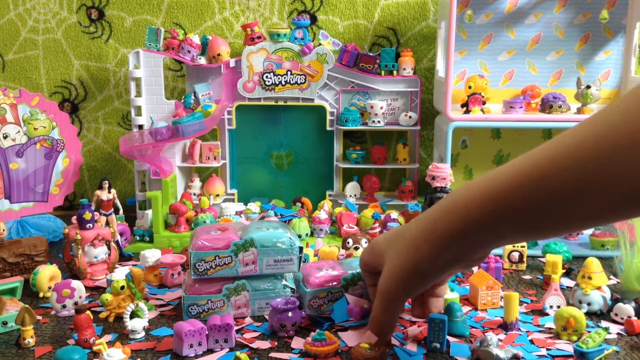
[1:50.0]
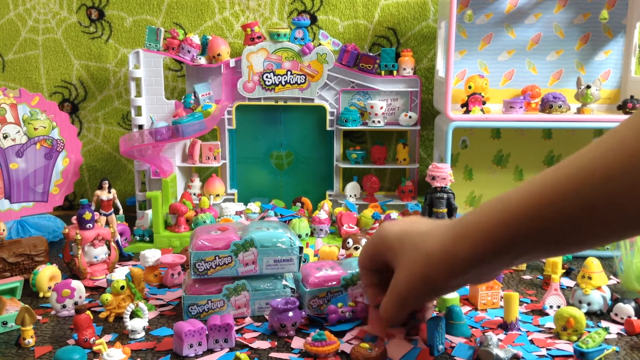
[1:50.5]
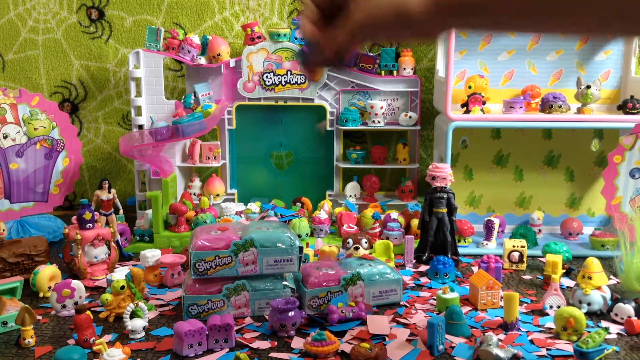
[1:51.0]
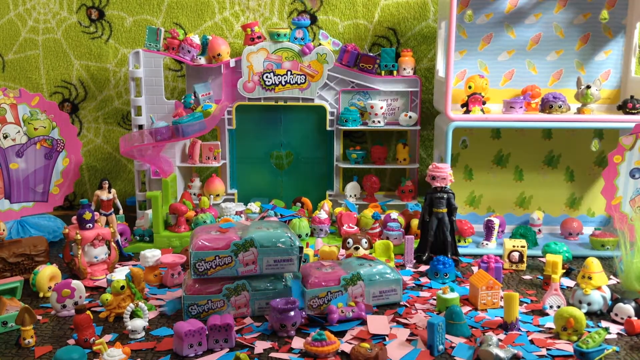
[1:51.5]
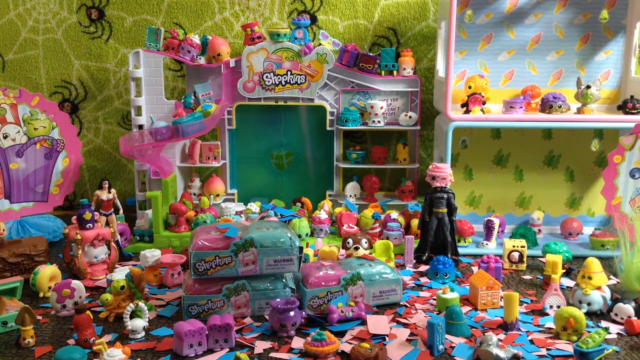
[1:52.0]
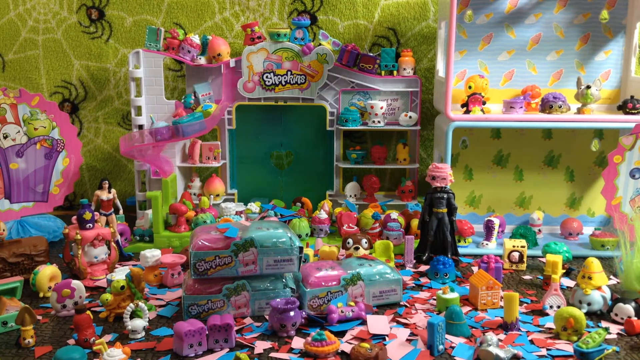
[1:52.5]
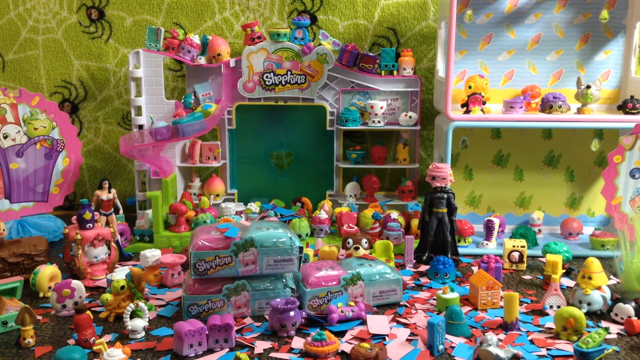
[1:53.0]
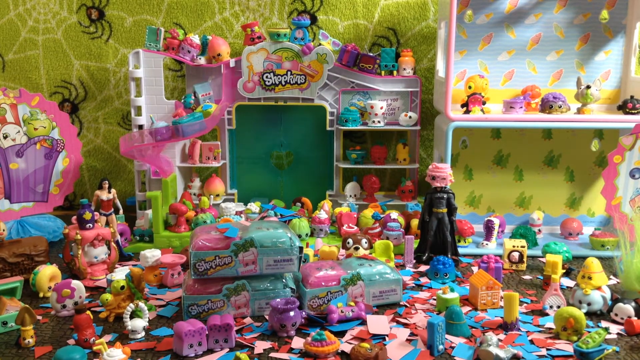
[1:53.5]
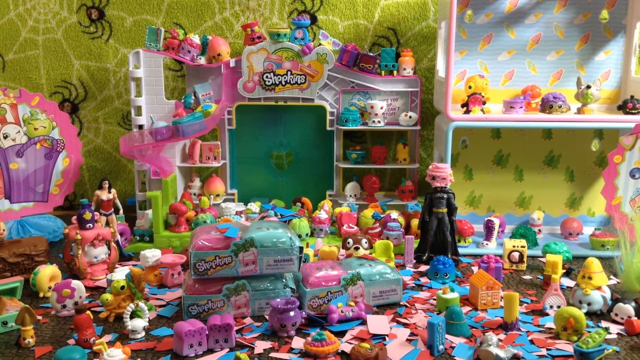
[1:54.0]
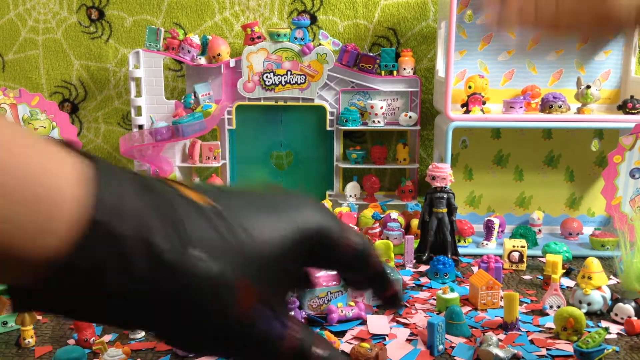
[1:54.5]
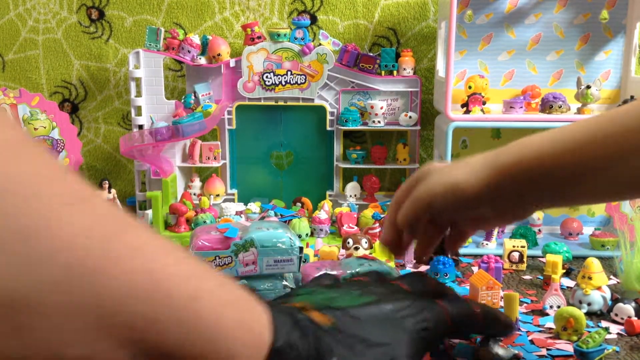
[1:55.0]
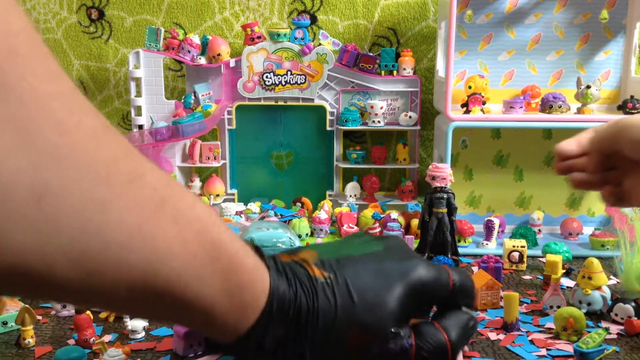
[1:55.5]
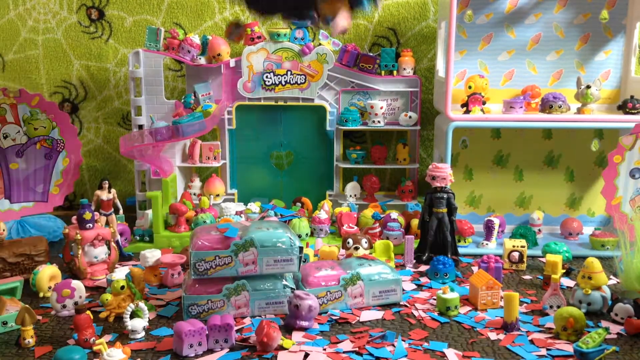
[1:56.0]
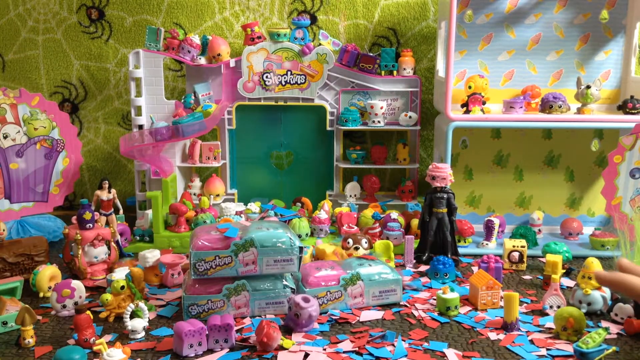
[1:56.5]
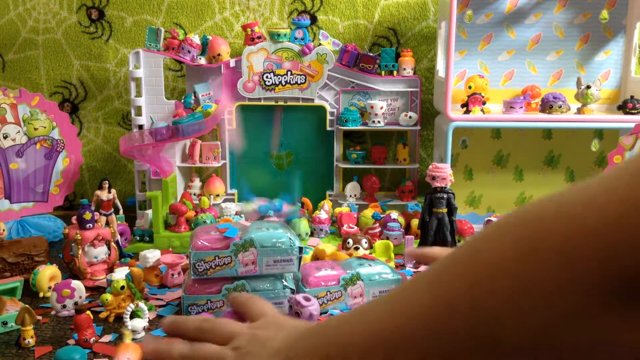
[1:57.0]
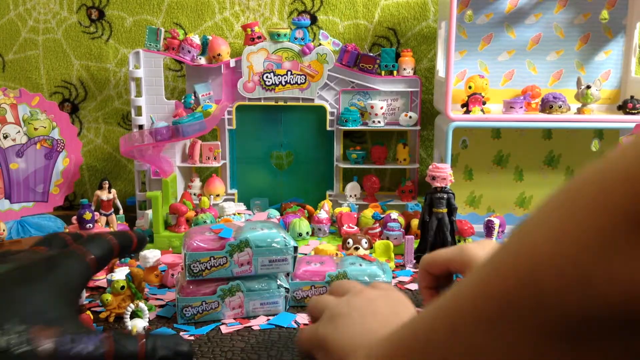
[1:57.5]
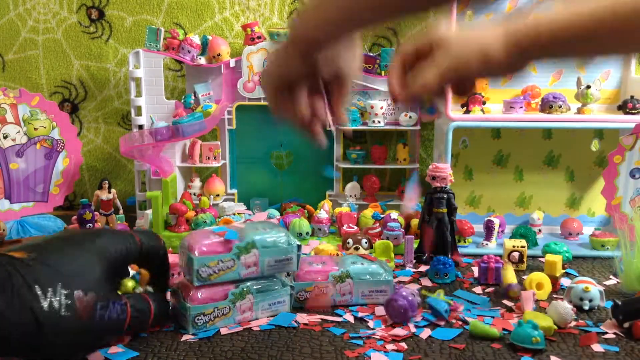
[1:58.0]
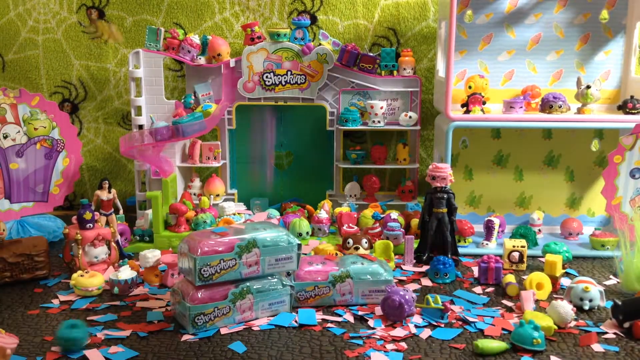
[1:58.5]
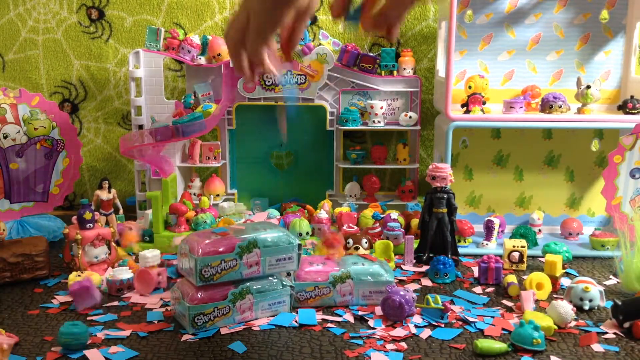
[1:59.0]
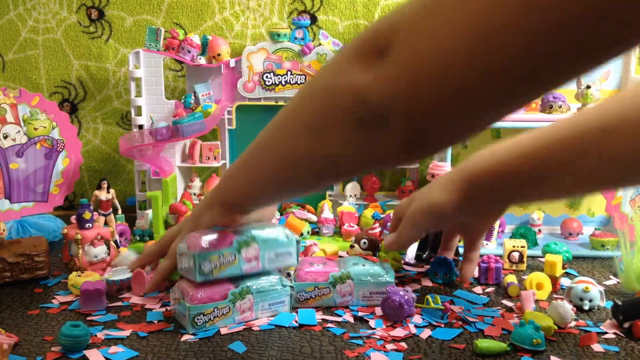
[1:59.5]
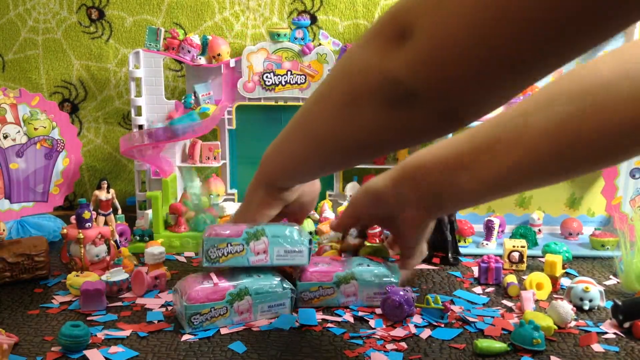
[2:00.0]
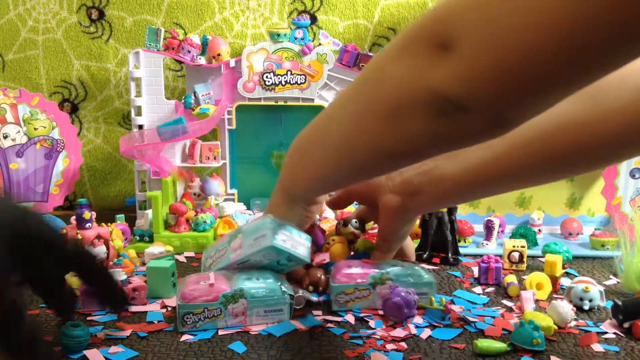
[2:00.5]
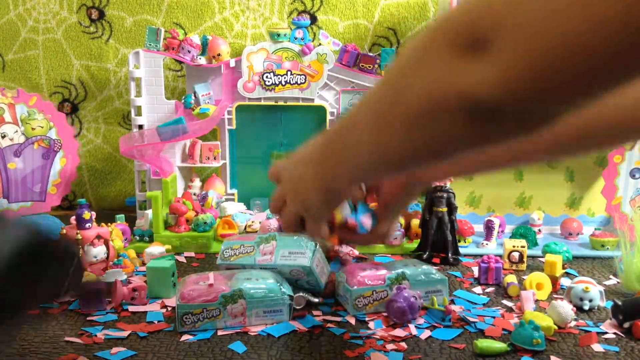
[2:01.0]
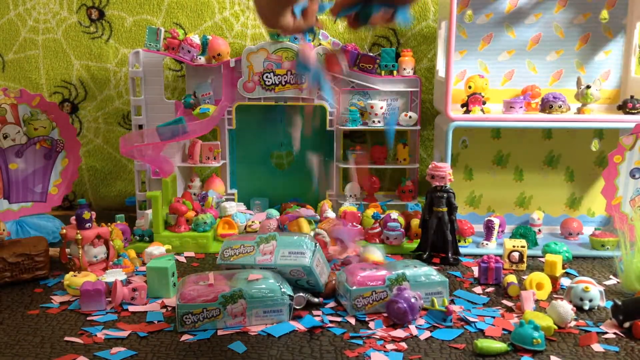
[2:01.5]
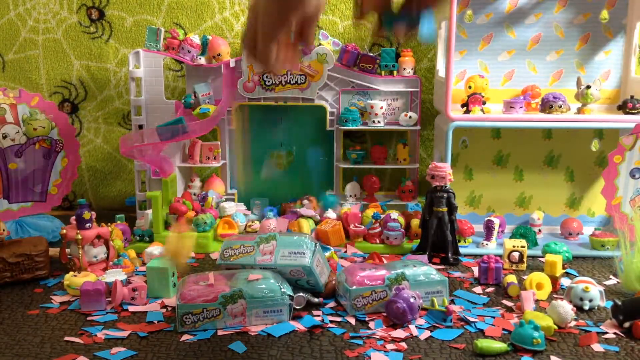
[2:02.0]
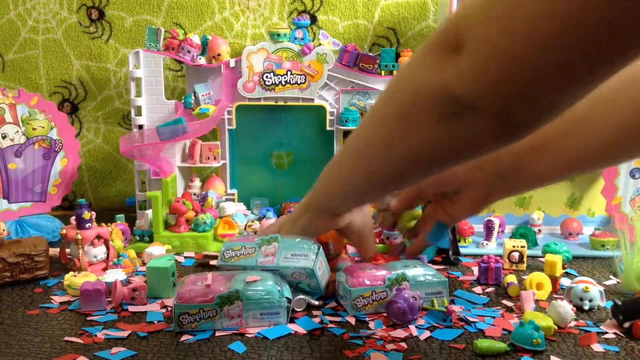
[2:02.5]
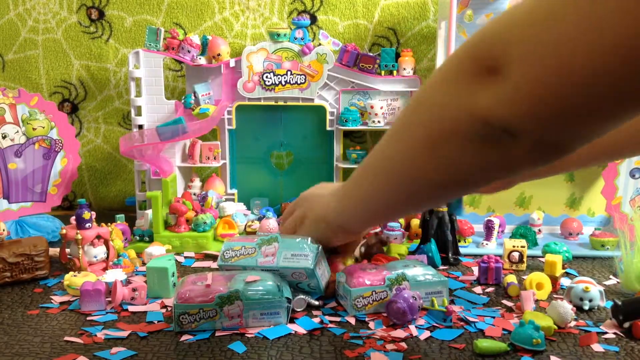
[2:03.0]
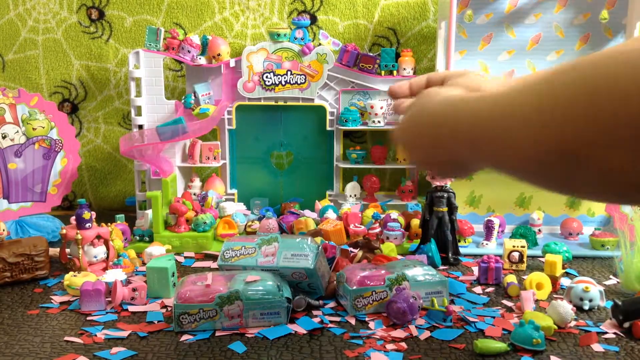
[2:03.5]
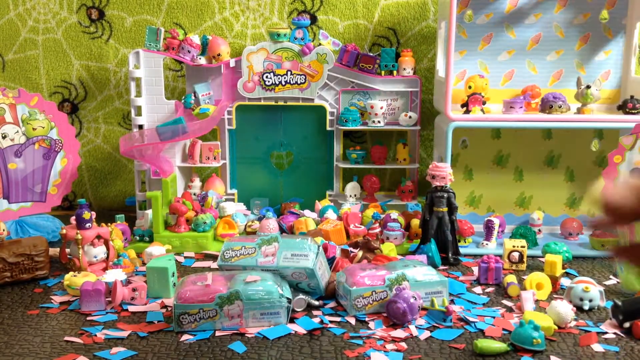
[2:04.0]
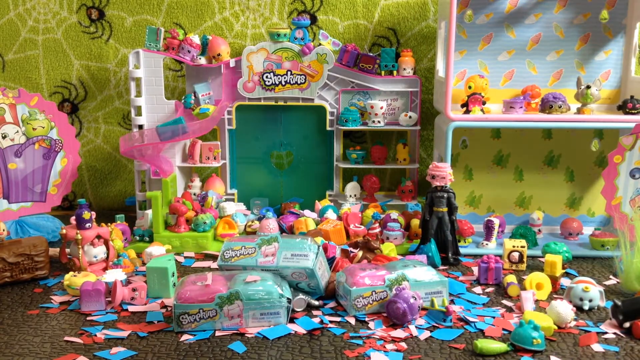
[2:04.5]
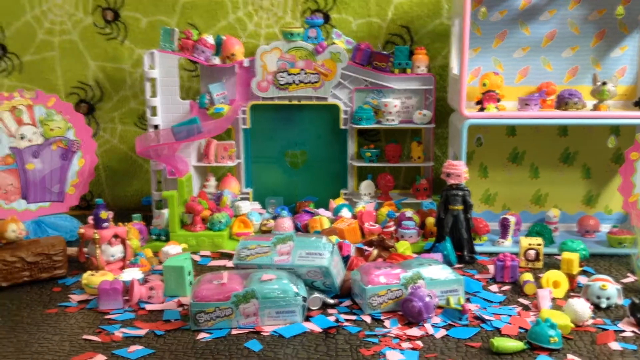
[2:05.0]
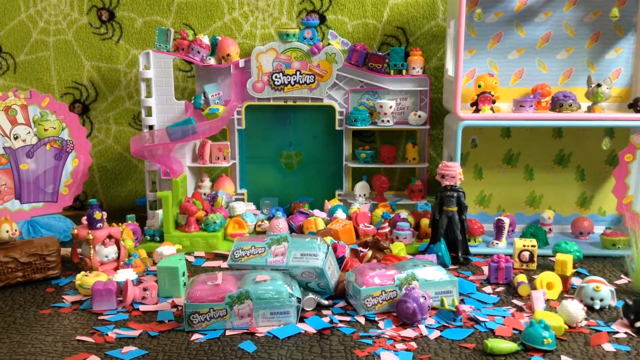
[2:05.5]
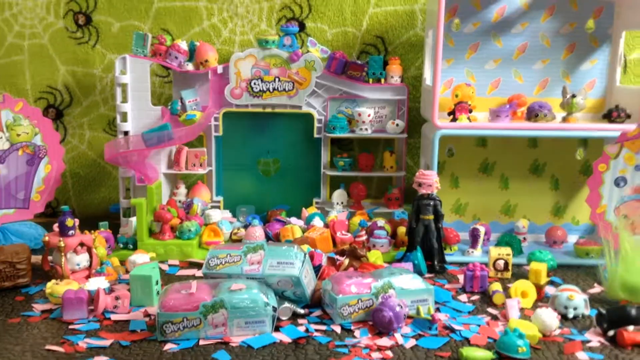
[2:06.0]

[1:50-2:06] The room is full of toys of different types and colors. A hand pops up, picks up some blue papers, and drops them through the air. Another hand wearing black gloves pops up, picks up papers mixed in blue and pink, and throws them through the air. The camera moves slightly to the right and then back to the left, capturing both ends of the room. The process of picking up the papers and dropping them through the air is repeated many times. Among the many toys are a duck toy and a house. The wall is green, with black spiders and white cobwebs drawn on it. A toy that looks like Batman wears a black suit and a yellow belt.